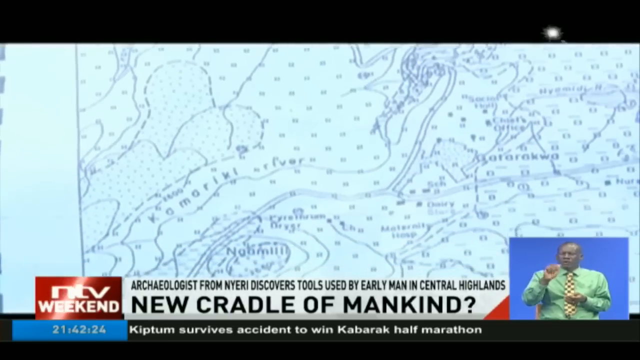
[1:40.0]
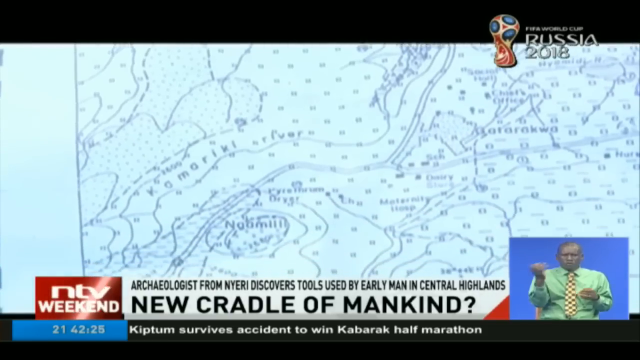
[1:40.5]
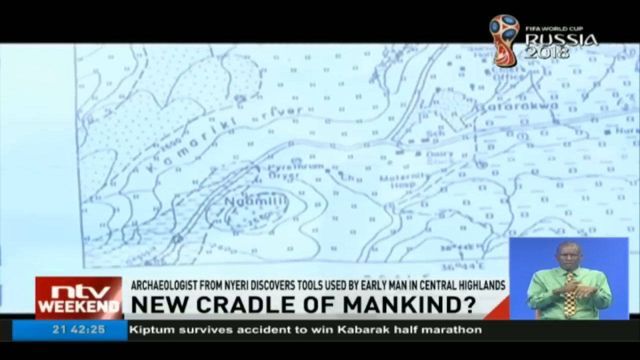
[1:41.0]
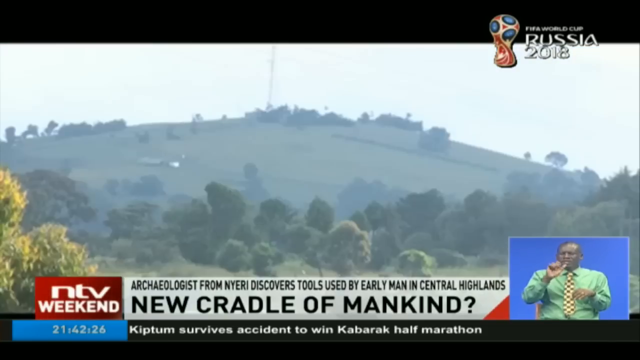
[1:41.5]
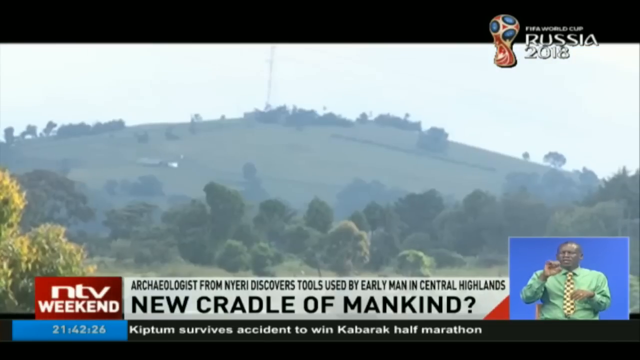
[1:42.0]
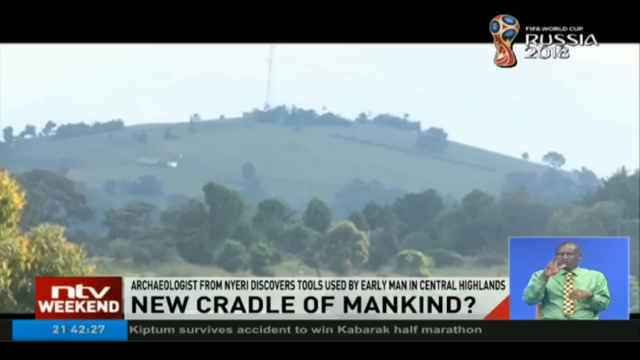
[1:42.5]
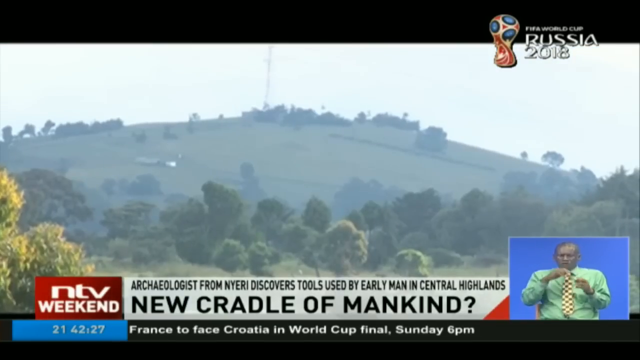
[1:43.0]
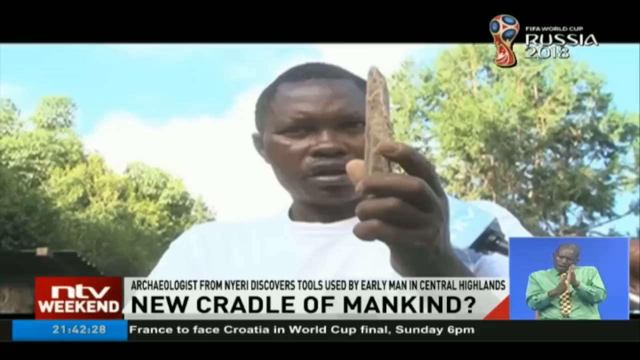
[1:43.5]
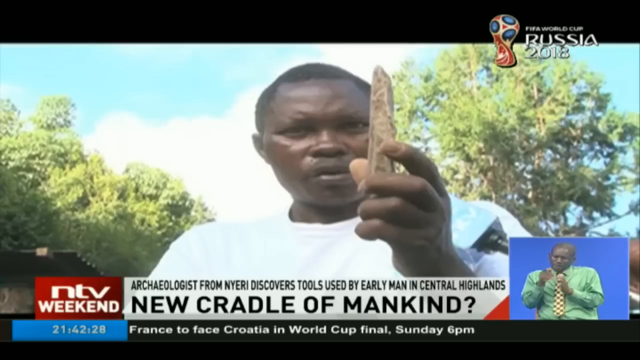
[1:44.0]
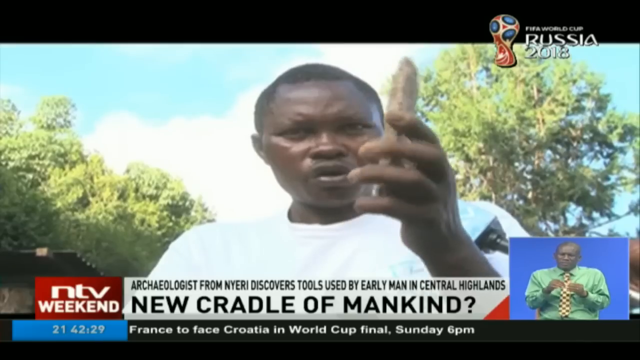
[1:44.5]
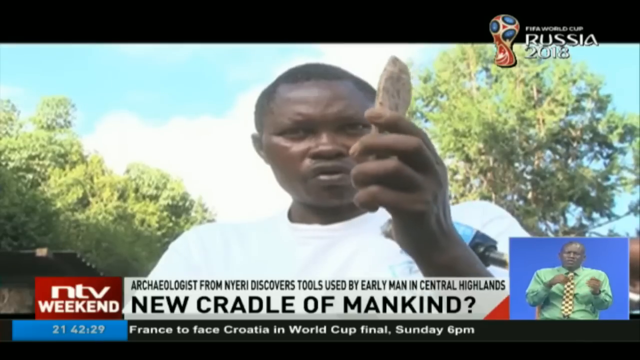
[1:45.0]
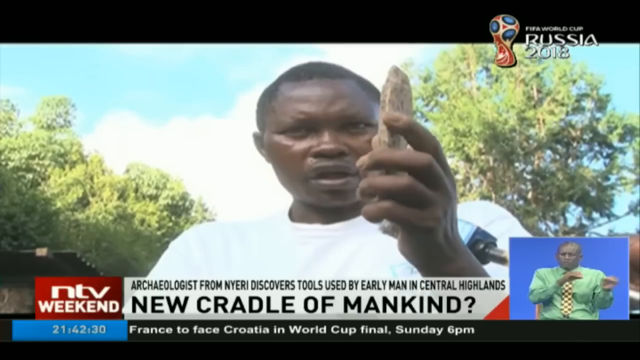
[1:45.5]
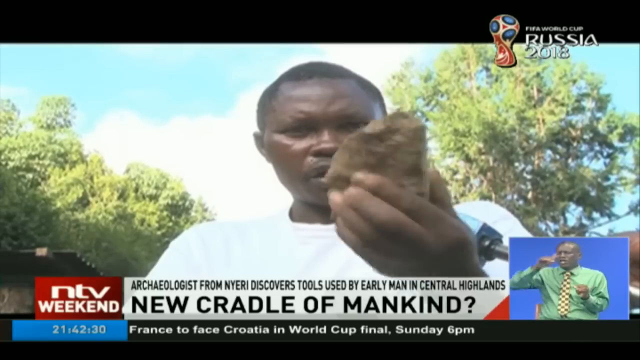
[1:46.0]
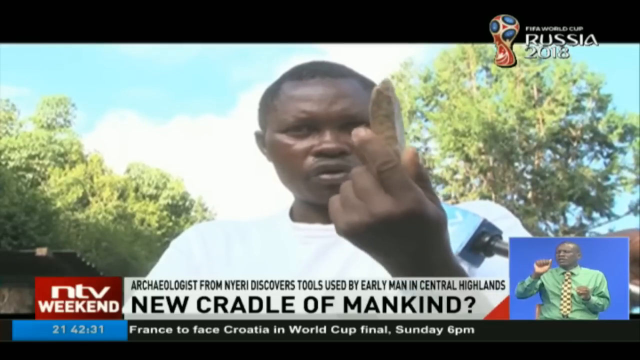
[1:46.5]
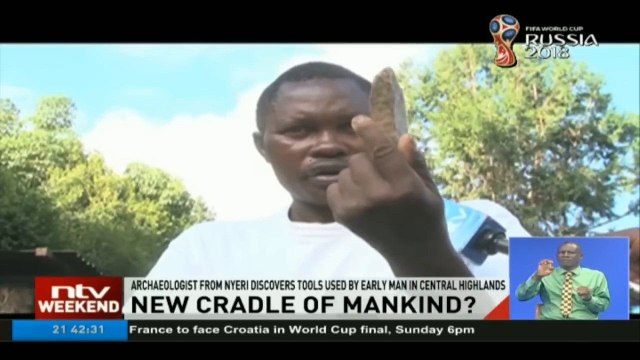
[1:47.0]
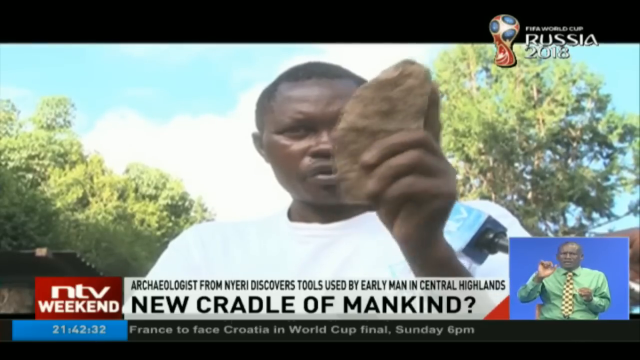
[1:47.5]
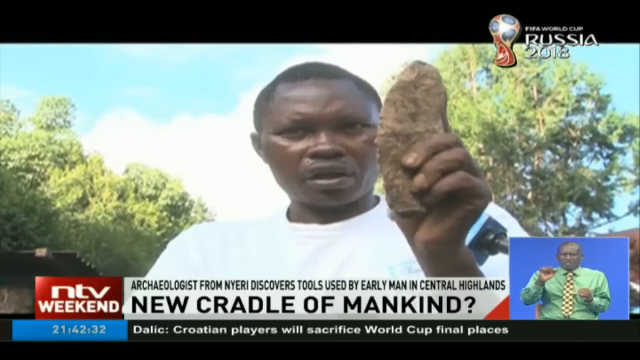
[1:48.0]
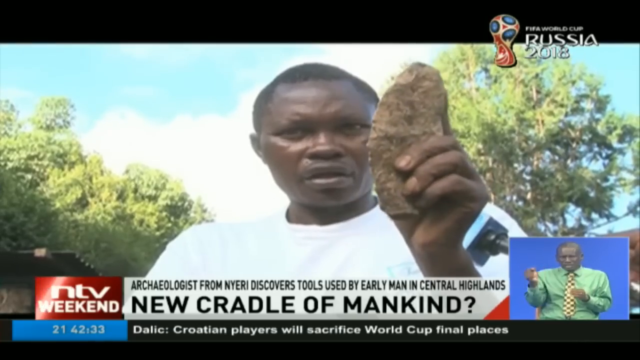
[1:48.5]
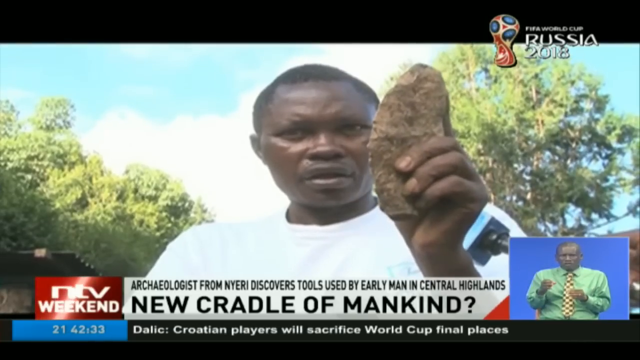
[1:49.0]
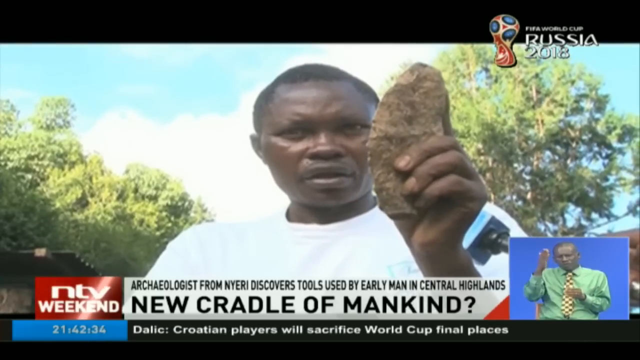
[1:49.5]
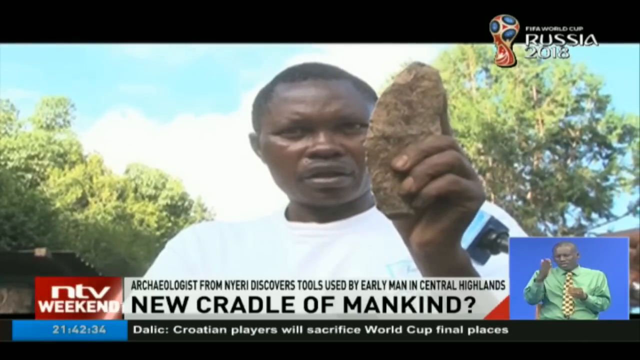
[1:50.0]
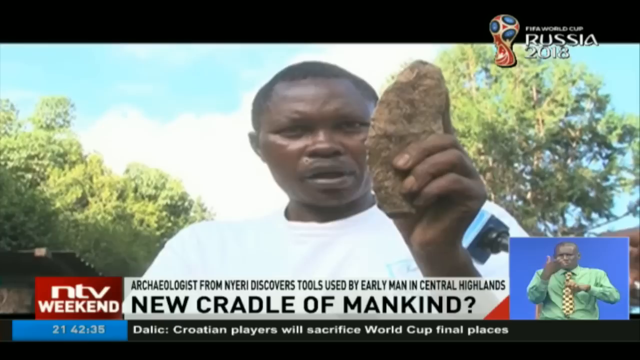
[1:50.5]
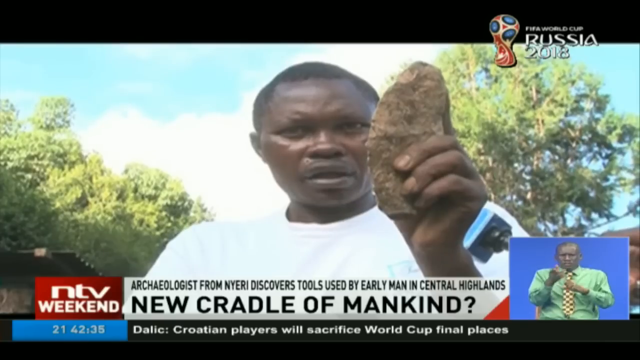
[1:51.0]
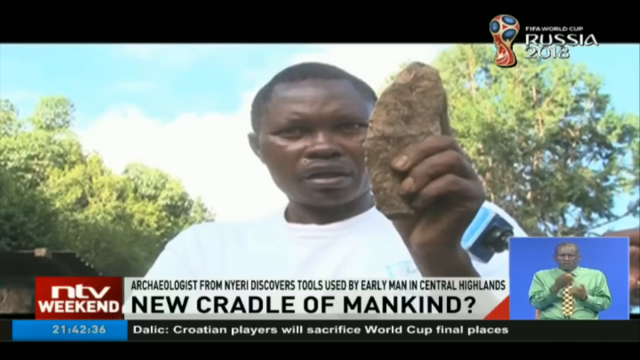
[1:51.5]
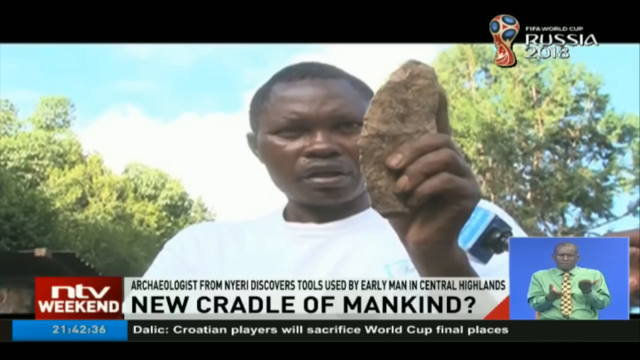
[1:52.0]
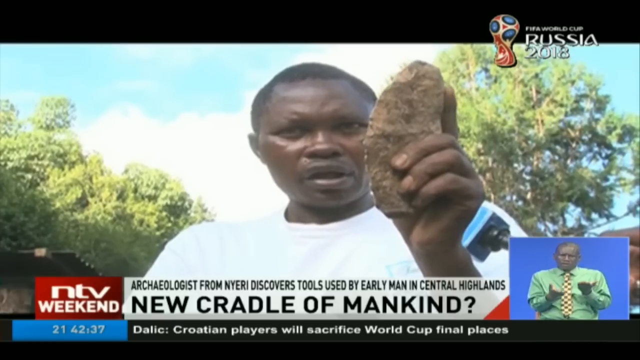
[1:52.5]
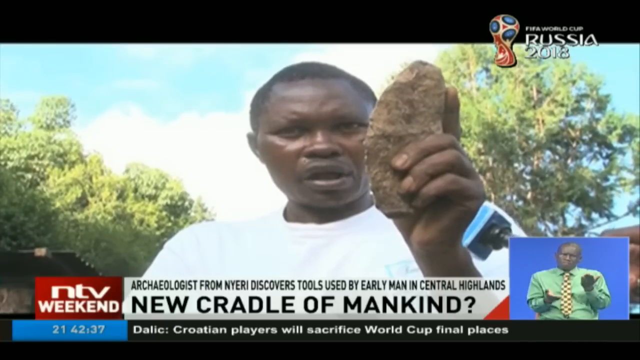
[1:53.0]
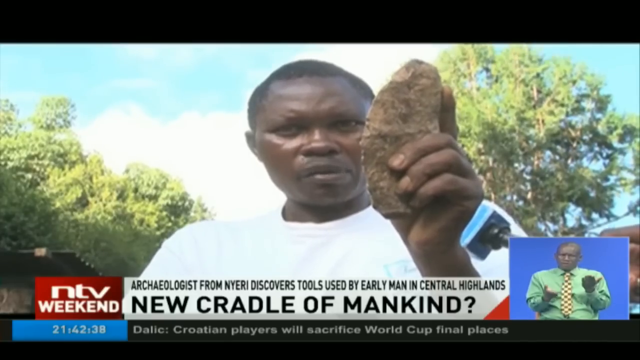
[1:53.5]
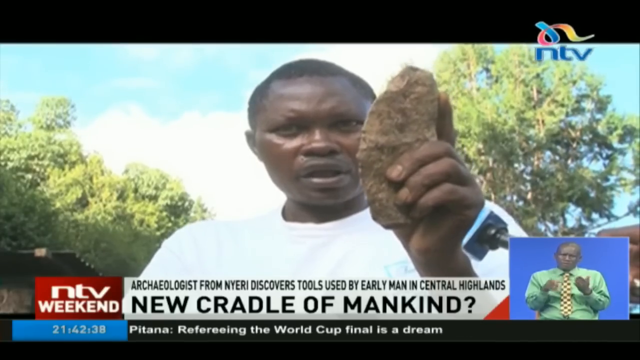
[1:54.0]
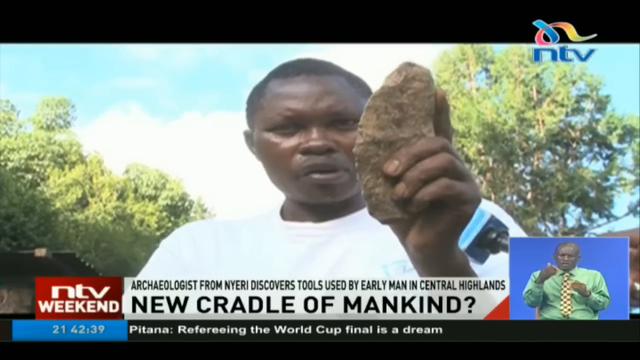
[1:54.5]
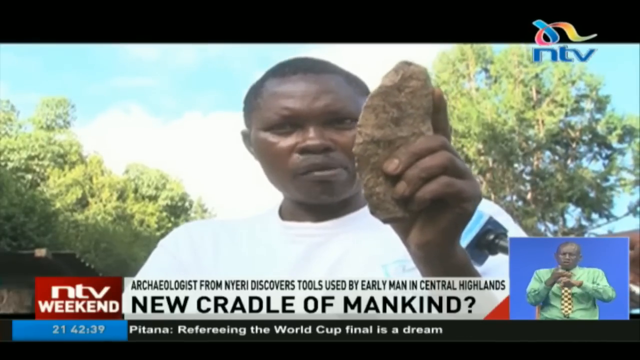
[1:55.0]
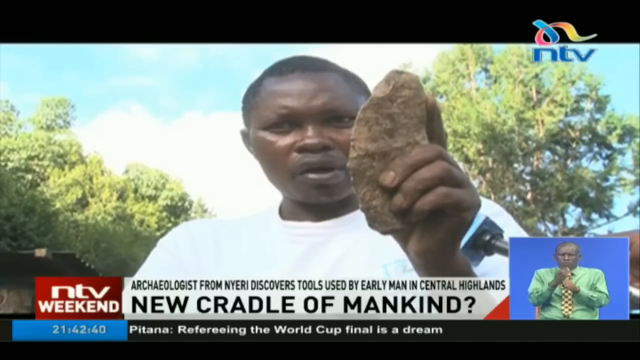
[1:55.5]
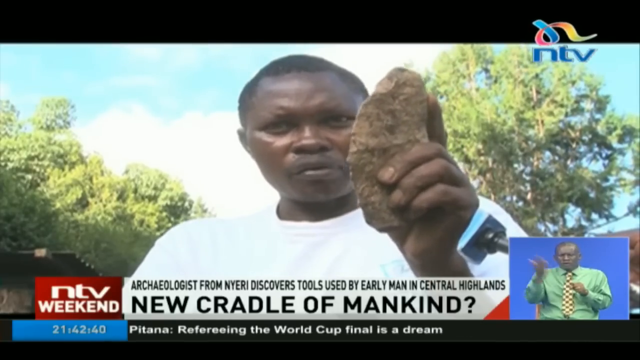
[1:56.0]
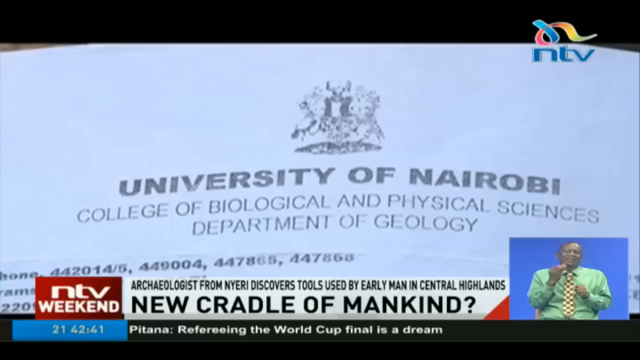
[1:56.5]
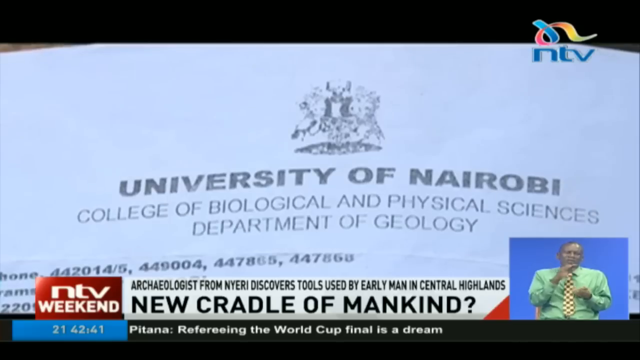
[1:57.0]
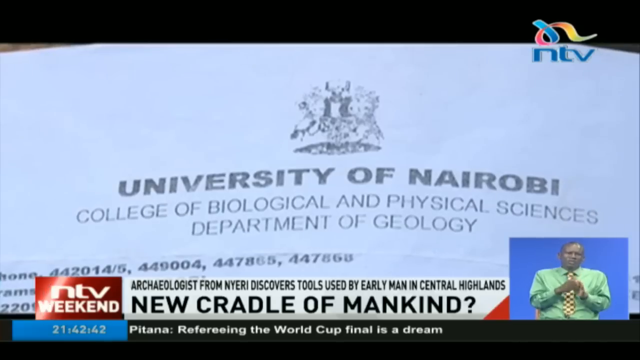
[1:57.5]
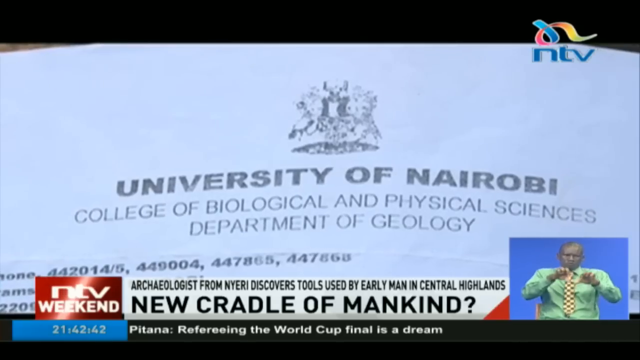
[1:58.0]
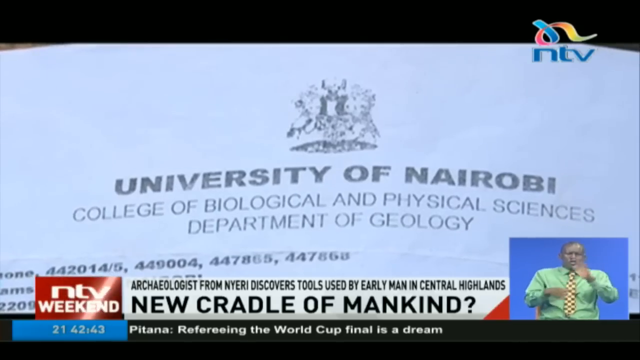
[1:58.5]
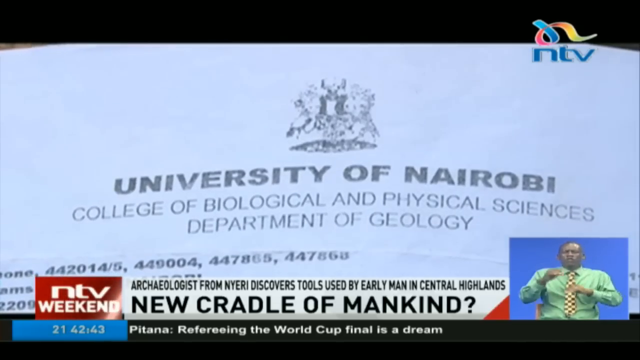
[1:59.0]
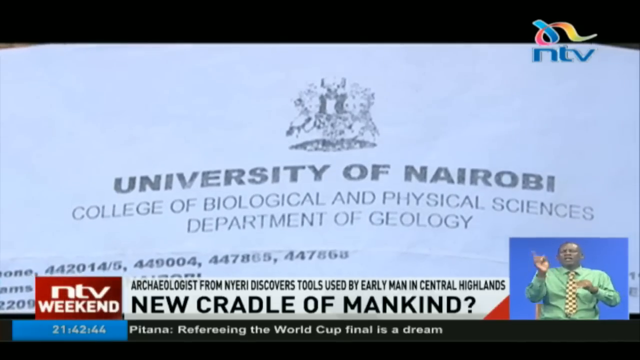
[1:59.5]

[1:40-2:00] The video is still about the tools from the new cradles of mankind, apparently from thousands of years ago, probably around 3,000 years ago. Nairobi, in Kenya, is referred to.